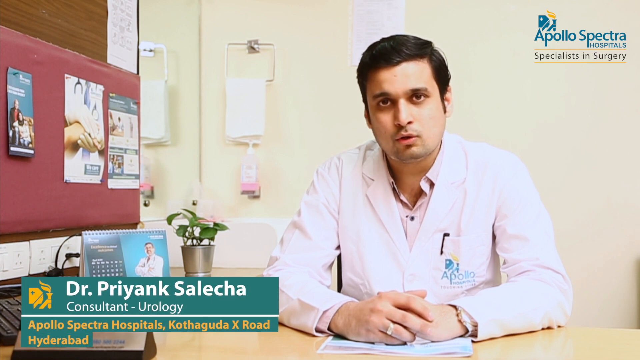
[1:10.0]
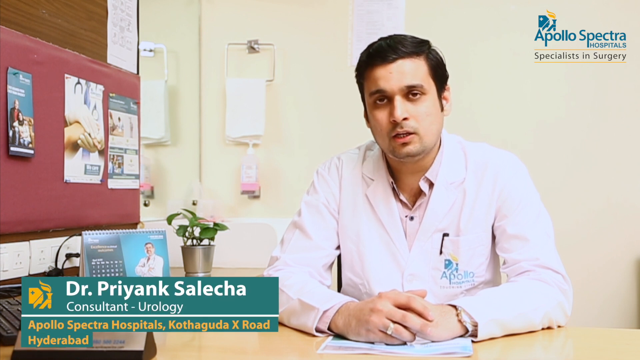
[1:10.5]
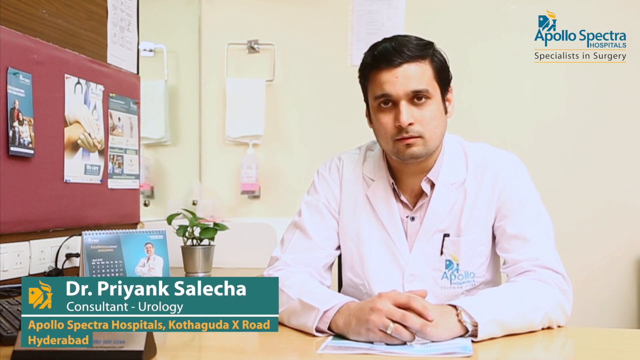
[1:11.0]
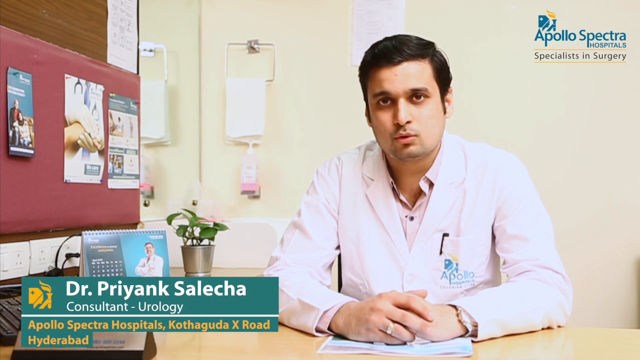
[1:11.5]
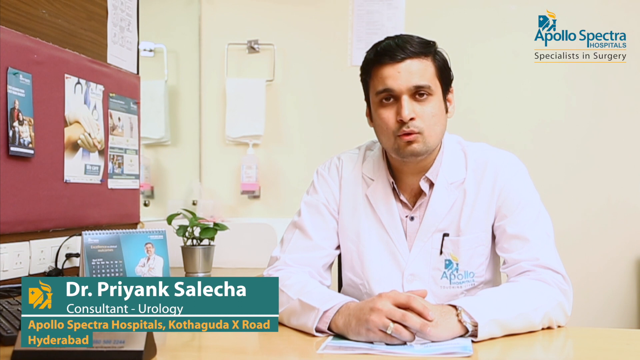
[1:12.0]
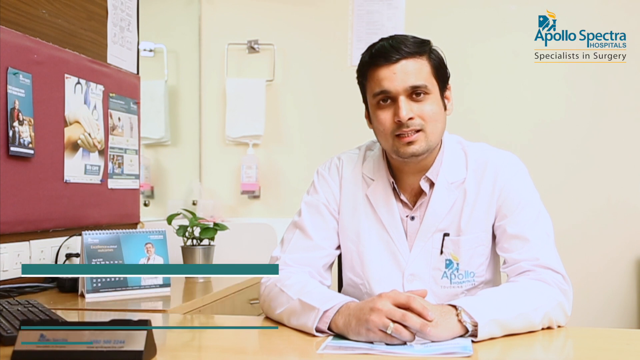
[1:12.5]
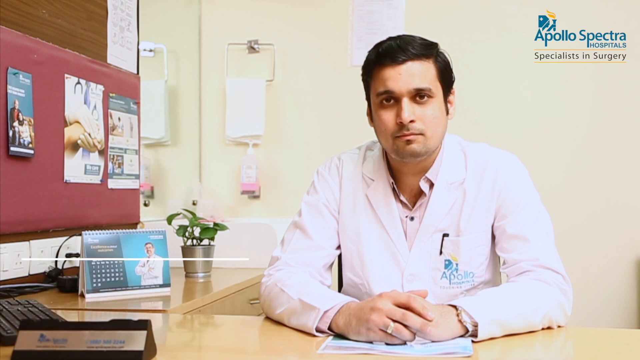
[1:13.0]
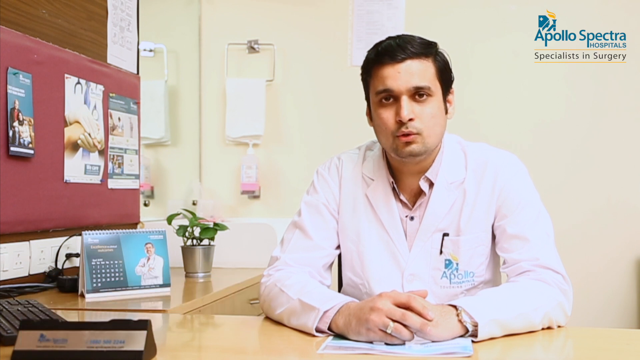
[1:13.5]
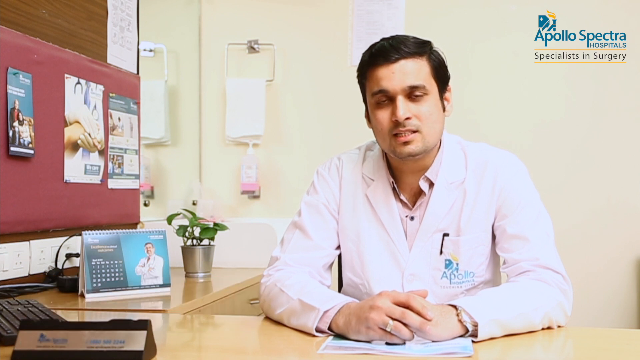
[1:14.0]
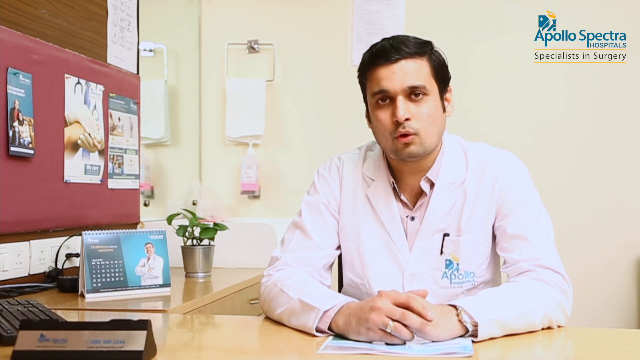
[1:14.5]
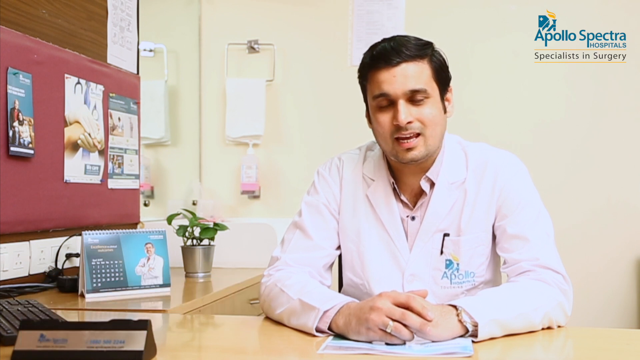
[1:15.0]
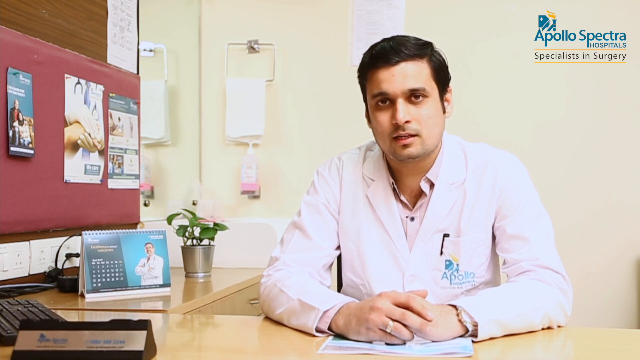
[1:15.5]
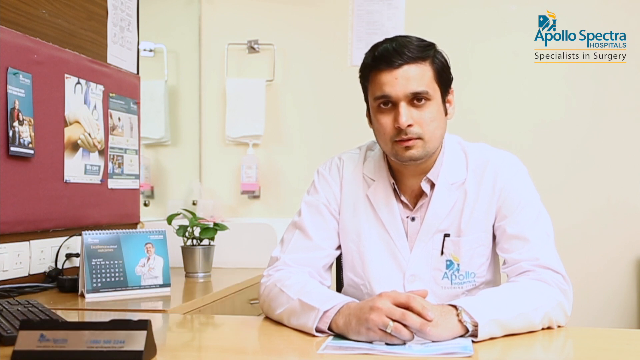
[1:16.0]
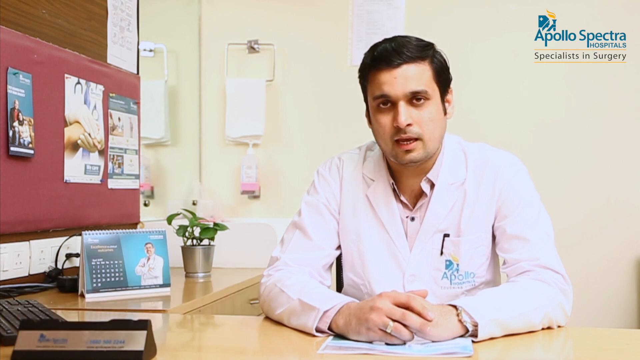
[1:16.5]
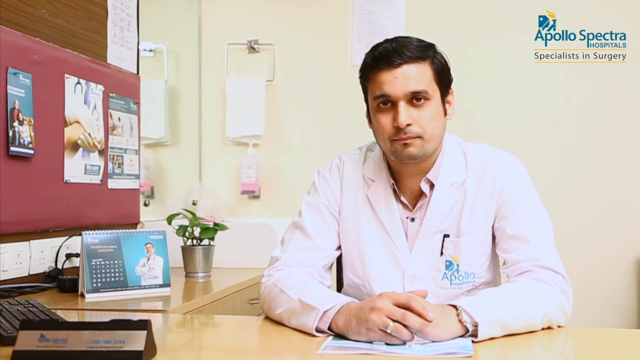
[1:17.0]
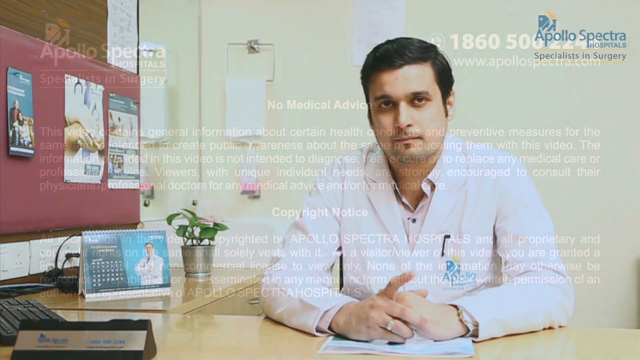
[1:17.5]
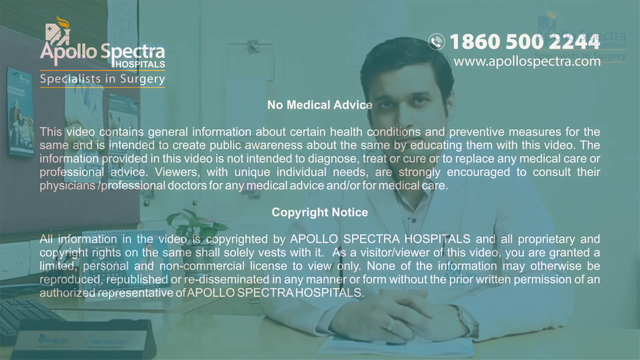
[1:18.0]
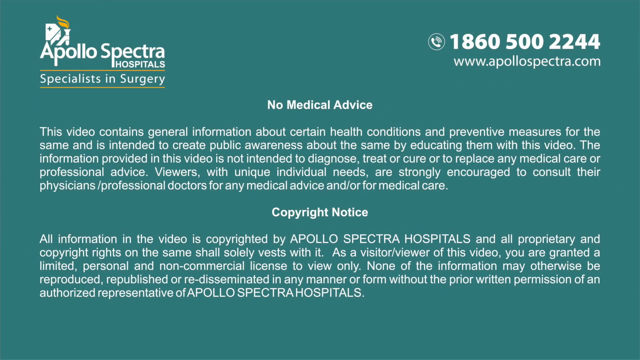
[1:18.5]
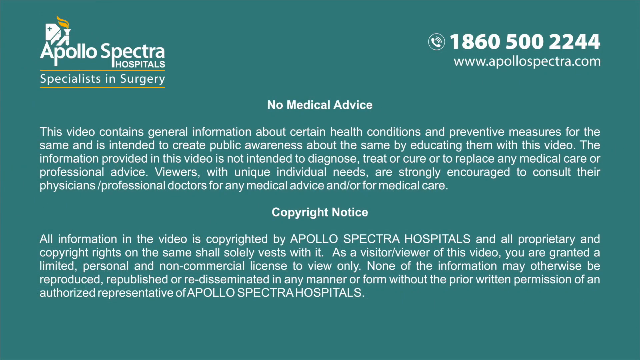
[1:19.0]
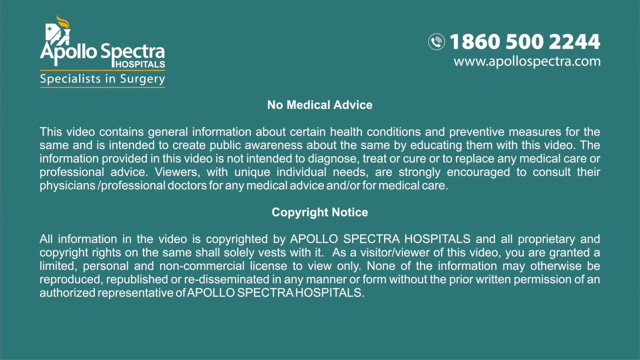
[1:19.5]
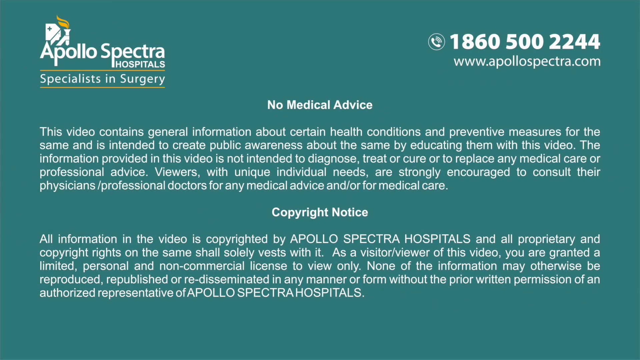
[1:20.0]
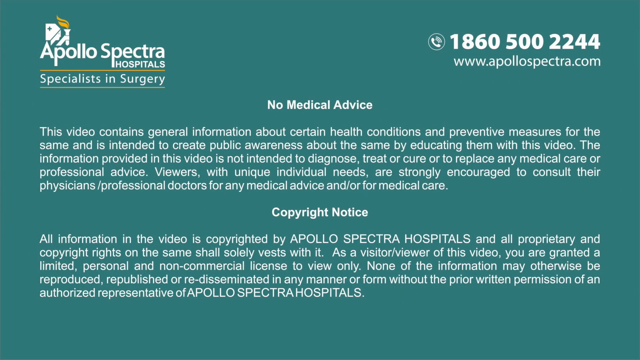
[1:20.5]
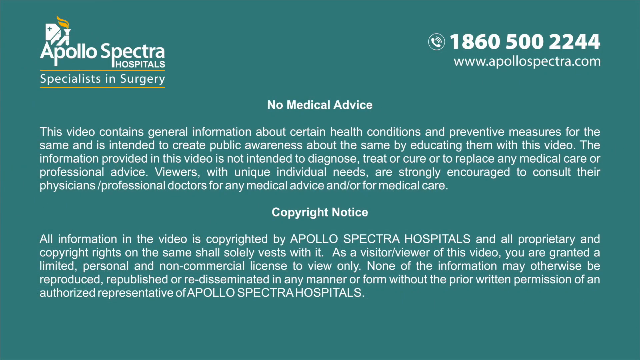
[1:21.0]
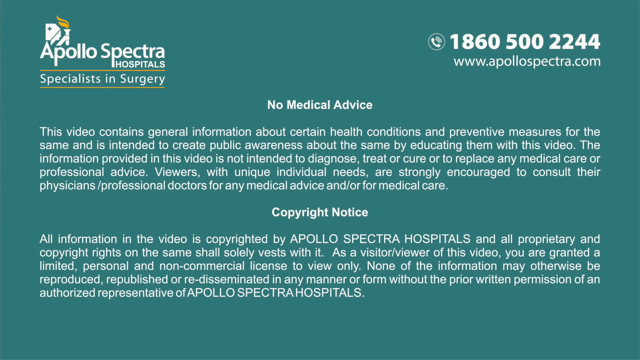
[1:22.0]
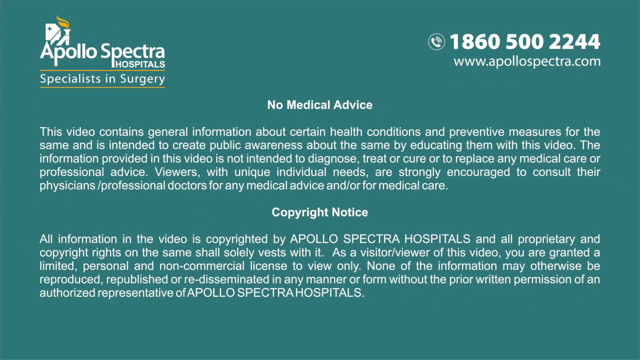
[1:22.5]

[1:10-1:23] The graphic with the doctor's name disappears, and the screen changes to a teal background with a lot of text. The phone number and web address of Apollo Spectra are in the upper right-hand corner, and the upper left-hand corner says "Apollo Spectra hospitals." In the center it says "no medical advice," followed by a disclaimer paragraph about the video, and below that it says "copyright notice," followed by another disclaimer about the video.